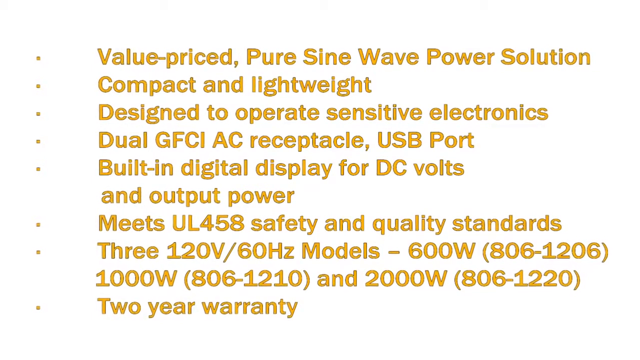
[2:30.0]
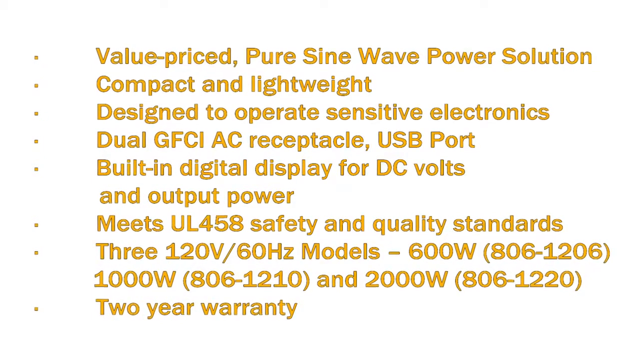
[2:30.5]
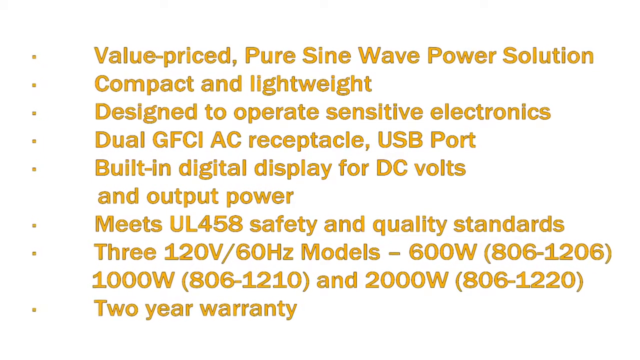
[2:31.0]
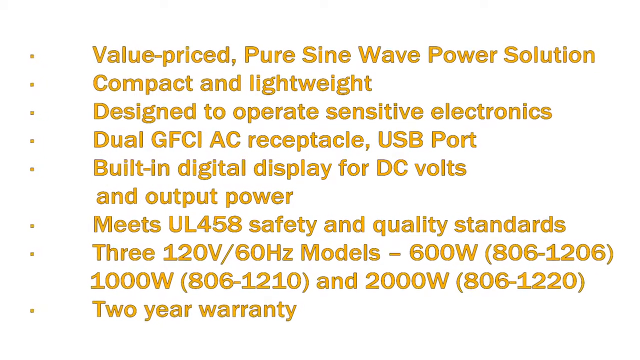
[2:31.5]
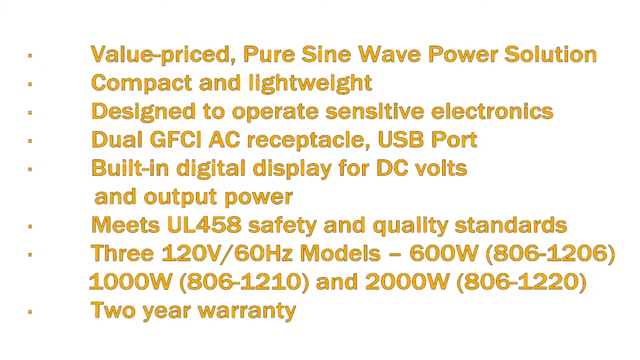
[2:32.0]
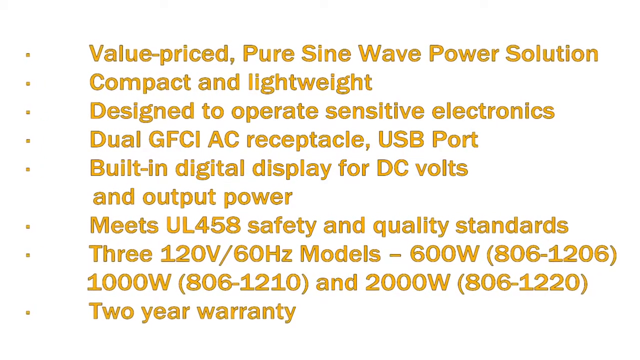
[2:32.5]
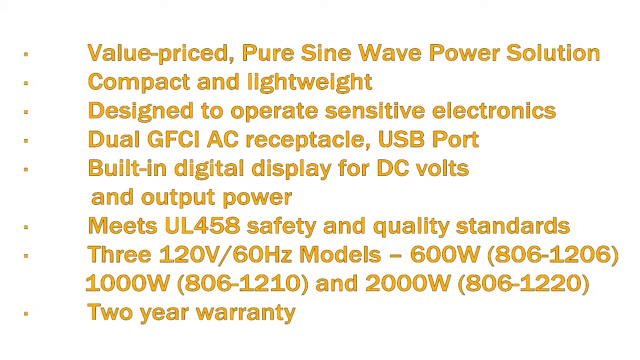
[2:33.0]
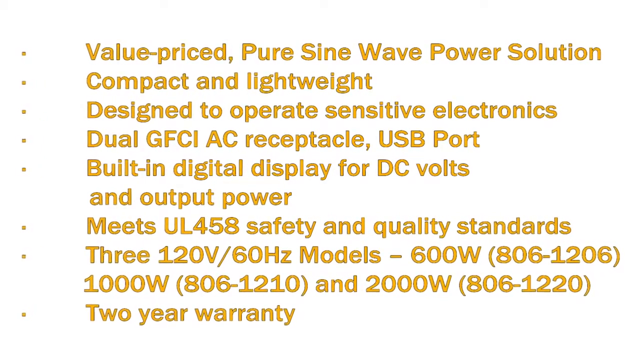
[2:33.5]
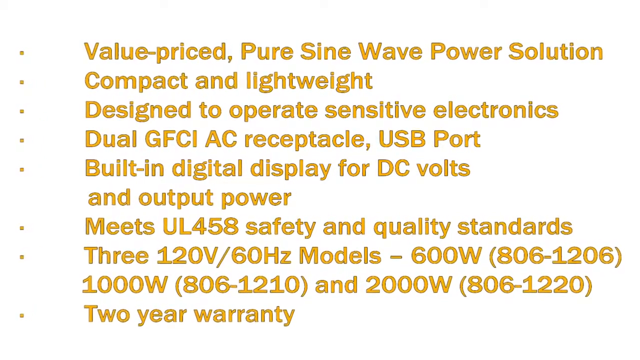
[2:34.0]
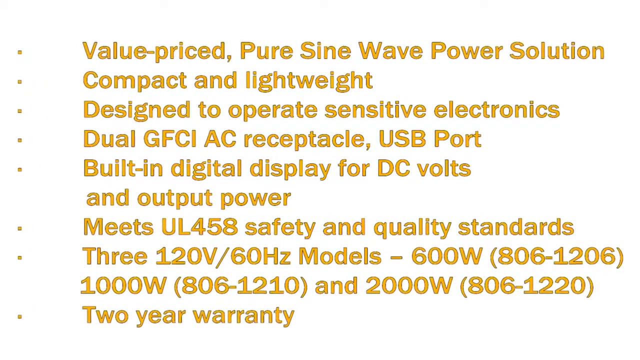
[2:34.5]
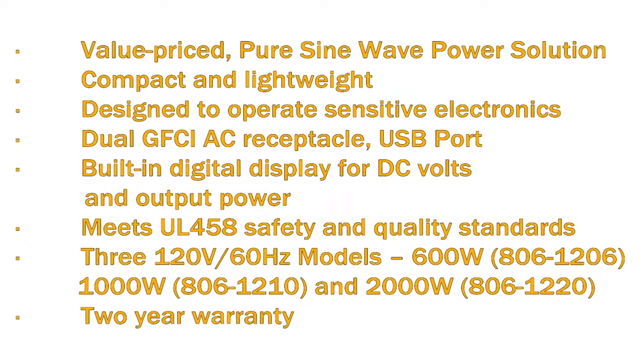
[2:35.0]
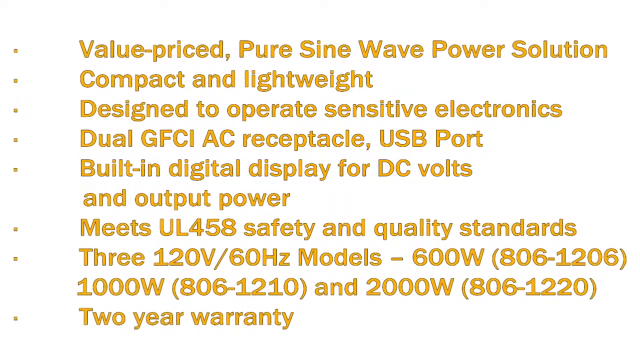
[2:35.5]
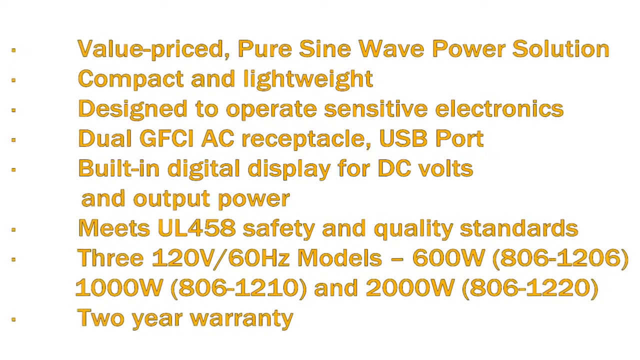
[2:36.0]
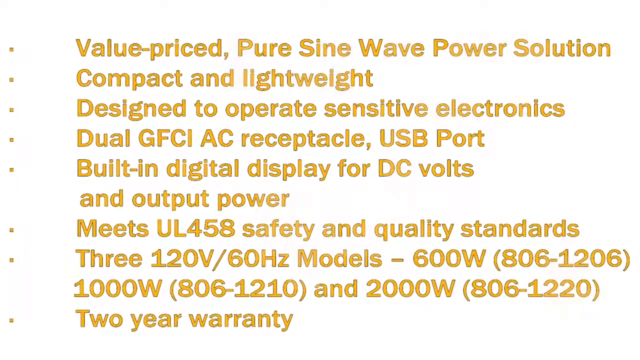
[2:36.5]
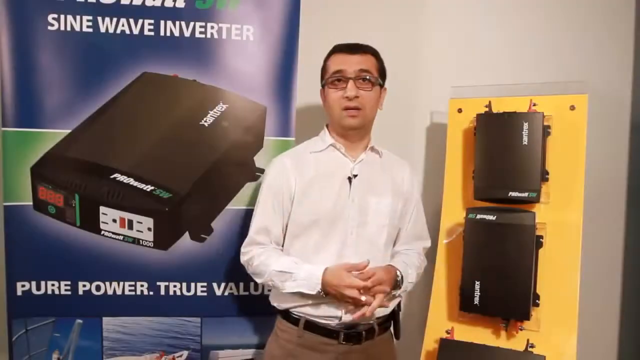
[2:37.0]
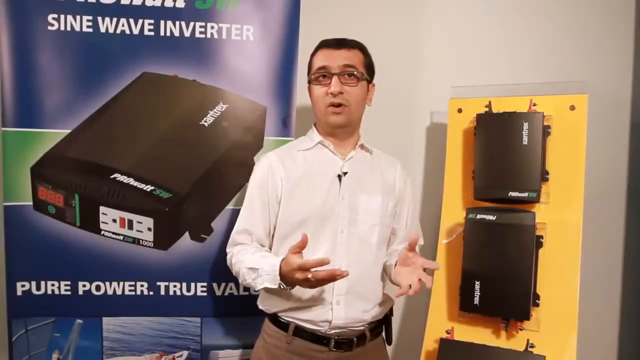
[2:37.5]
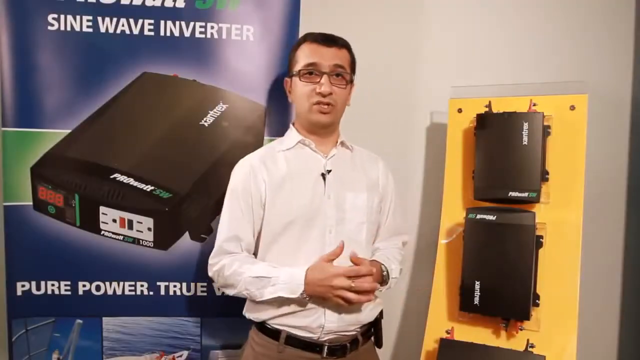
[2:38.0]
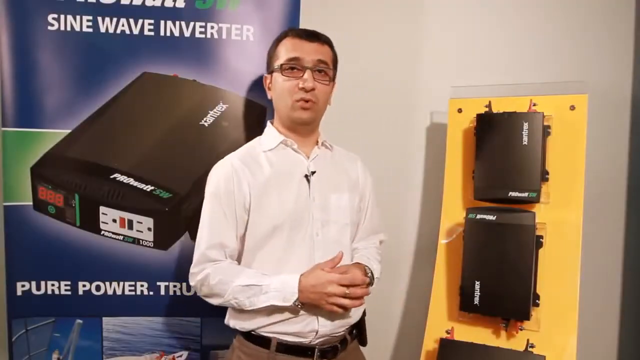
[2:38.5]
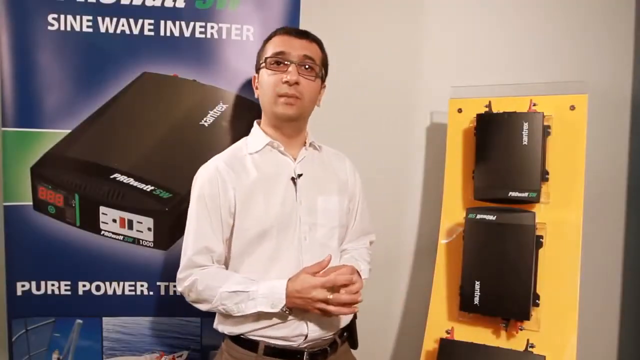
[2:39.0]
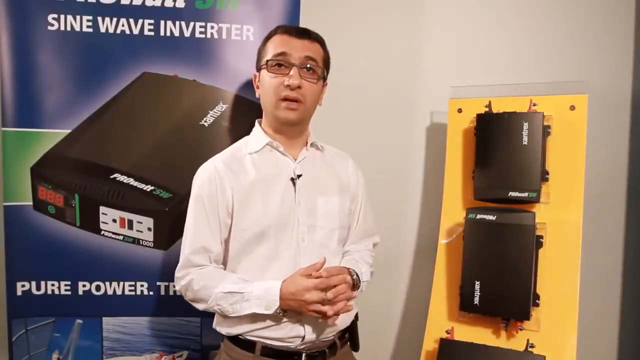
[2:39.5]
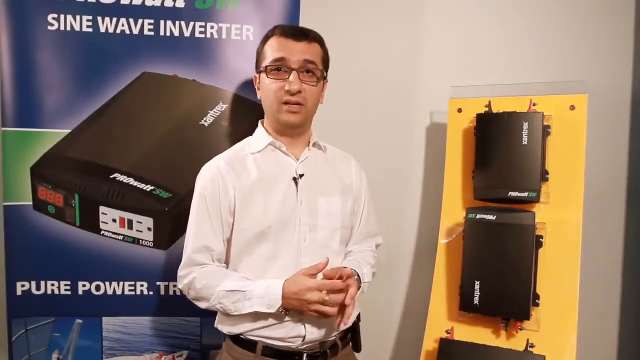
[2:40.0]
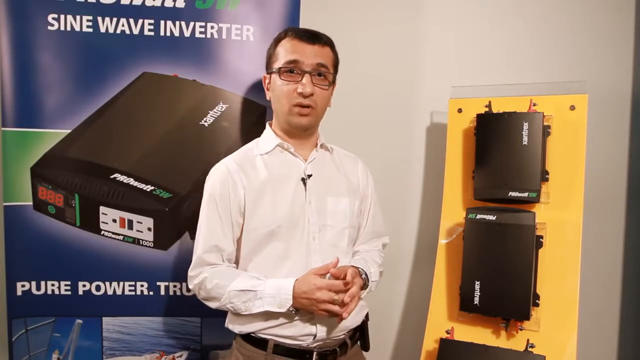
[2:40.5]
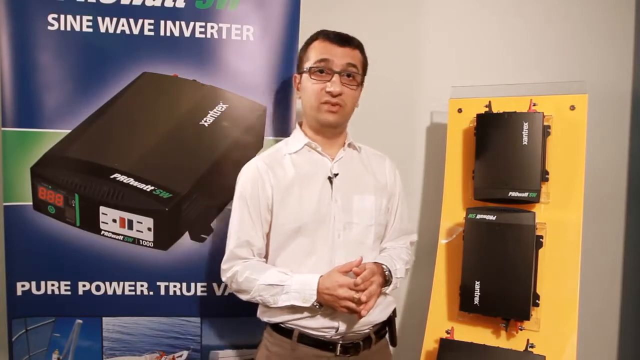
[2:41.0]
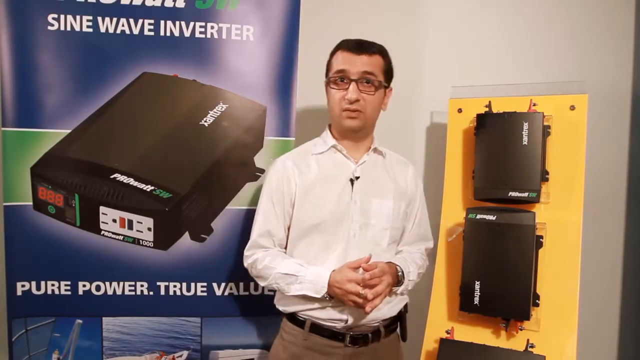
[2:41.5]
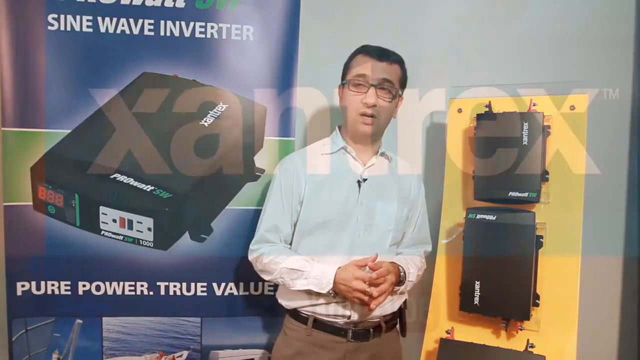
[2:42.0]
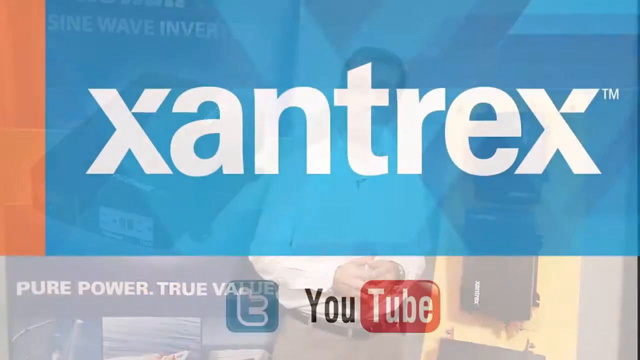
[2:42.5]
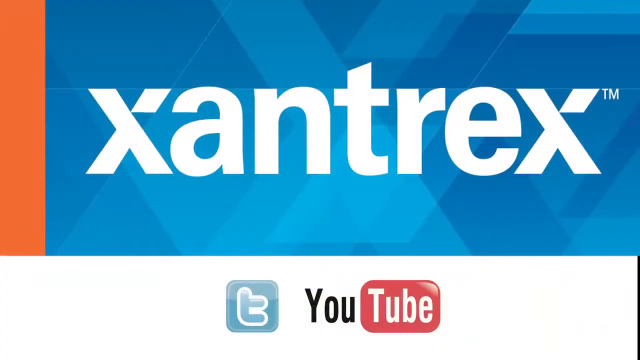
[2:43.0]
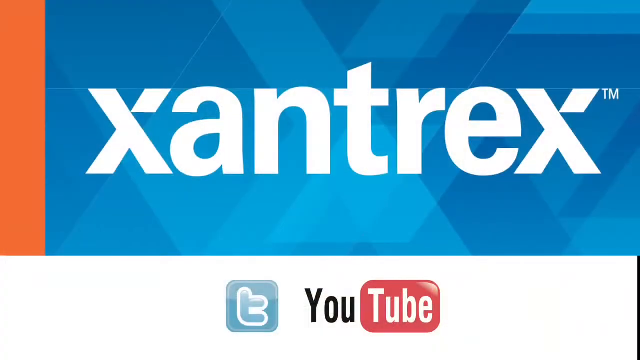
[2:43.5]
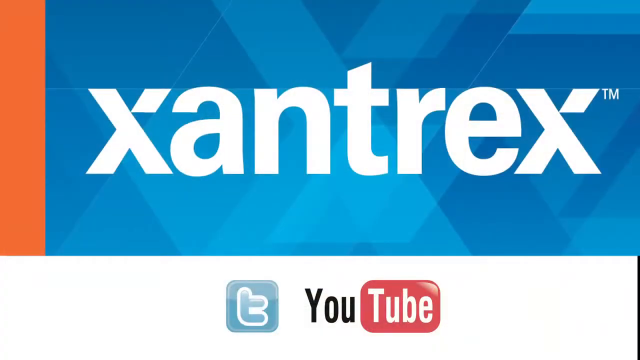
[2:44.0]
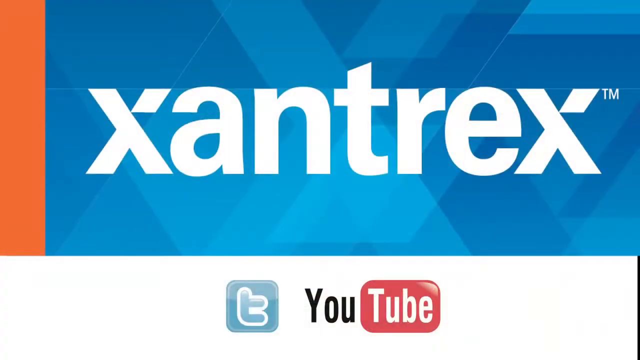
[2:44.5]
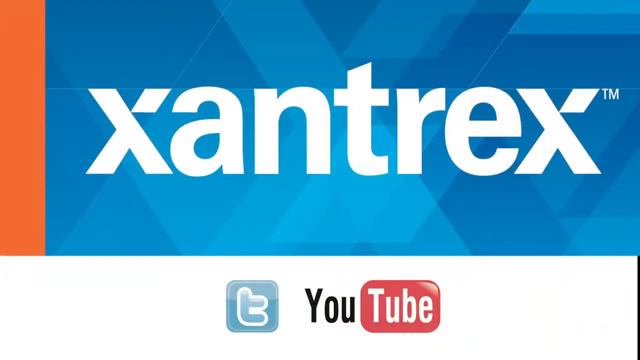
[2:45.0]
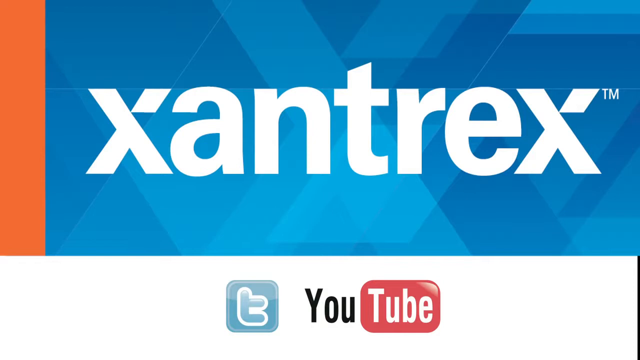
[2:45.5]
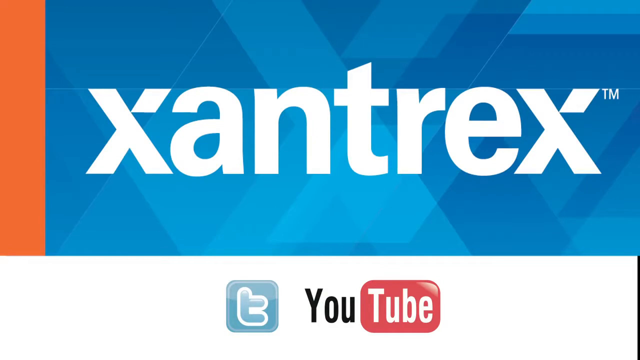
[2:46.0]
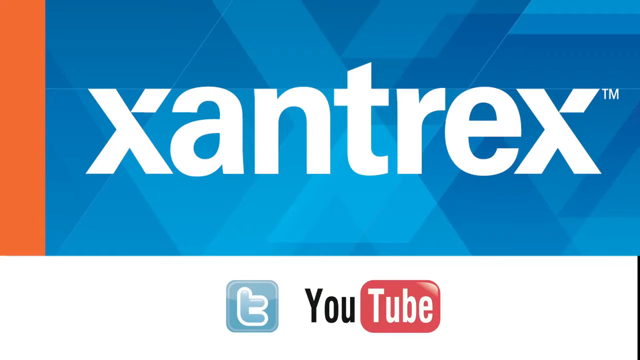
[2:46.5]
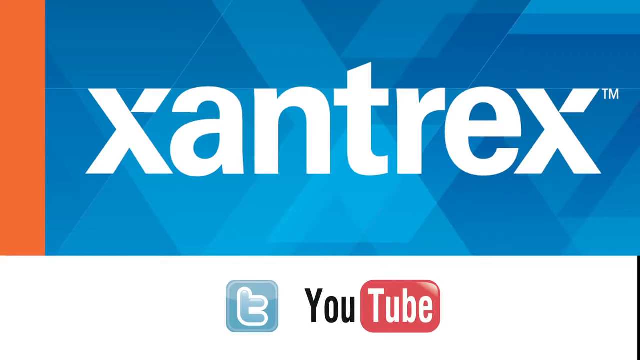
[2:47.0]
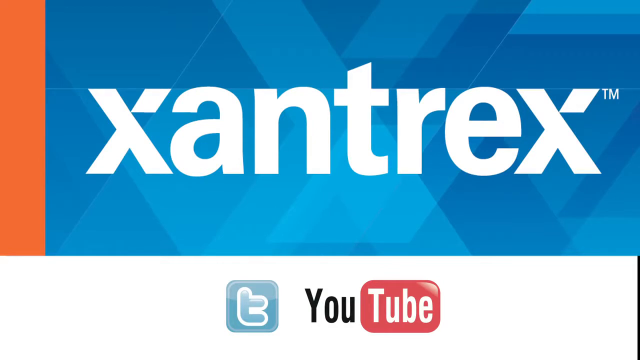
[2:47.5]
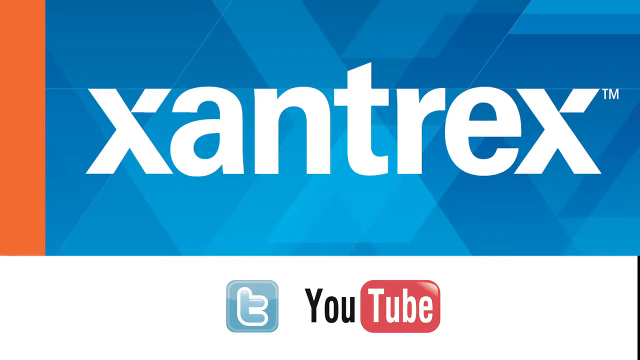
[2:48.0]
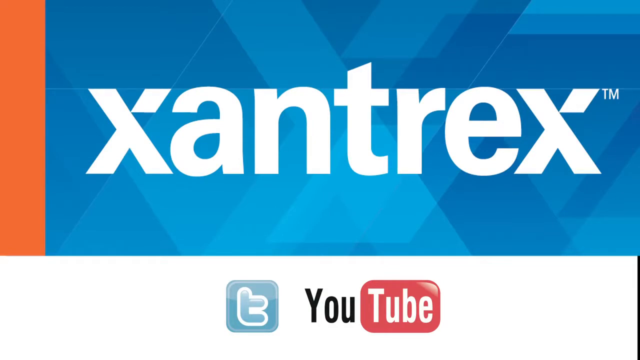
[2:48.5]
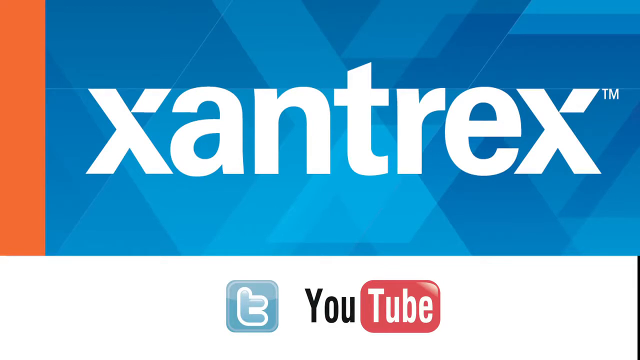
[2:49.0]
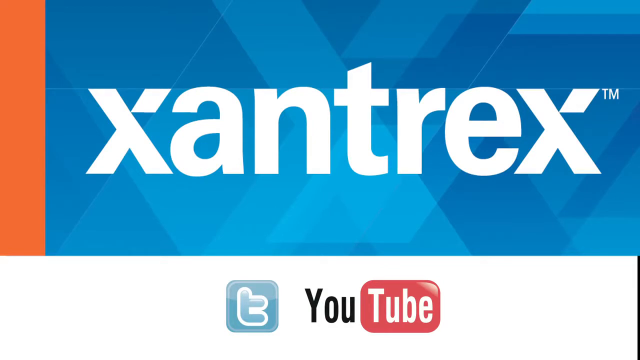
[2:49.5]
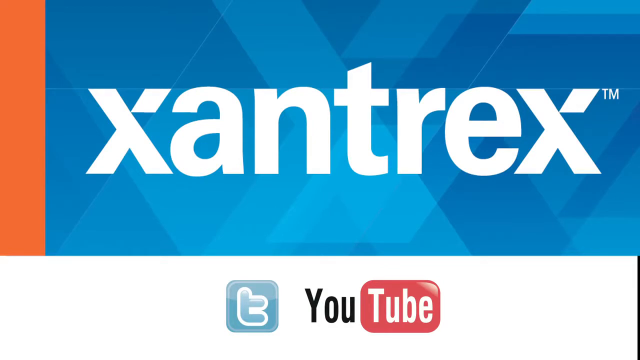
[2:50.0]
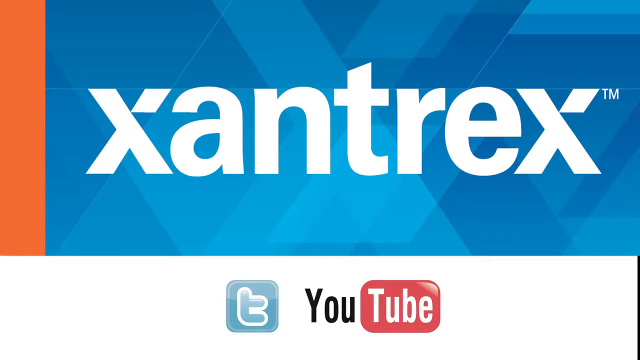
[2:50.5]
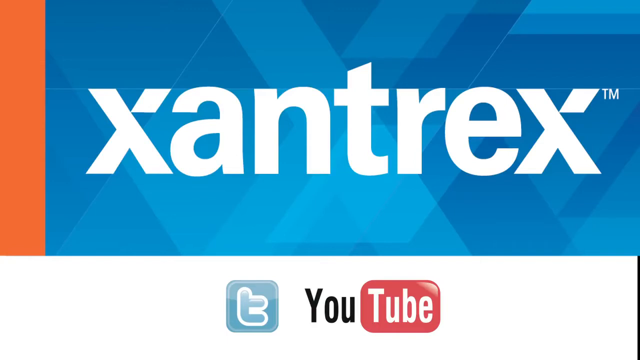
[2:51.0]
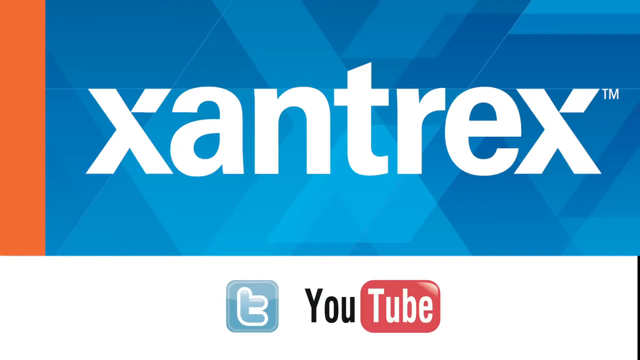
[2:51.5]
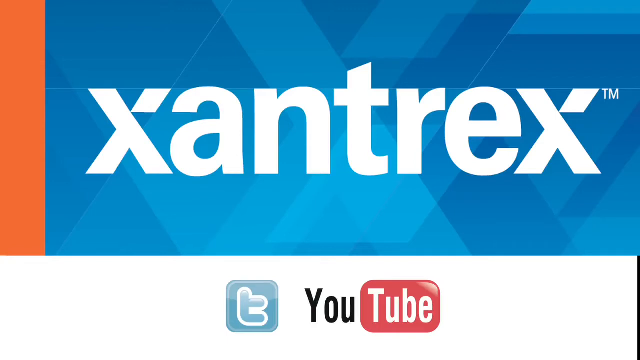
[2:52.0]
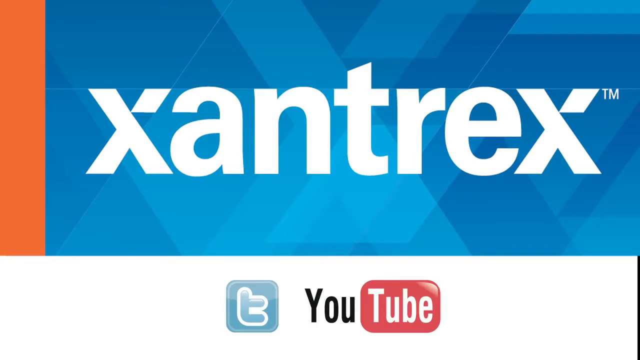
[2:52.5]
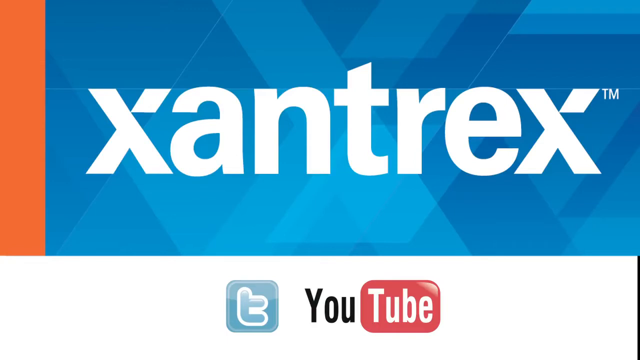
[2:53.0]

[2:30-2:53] A bulleted list of the device's features appears: "value priced pure sine wave power solution," "compact and lightweight," "designed to operate sensitive electronics," "dual GFCI AC receptacle USB port," "built-in digital display for DC volts and output power," "meets UL458 safety and quality standards," "three 120-volt 60-hertz models" (600-watt, 1,000-watt and 2,000-watt), and below that "two-year warranty." The man advertising the product then appears. He wears a white long-sleeved shirt, a watch on his left hand and a microphone on his shirt, with glasses on his head and black hair. To one side of him is a poster advertising the device, and on the right side of the screen several of the units are attached to a yellow board. At the end the Xantrex sign and the YouTube logo appear.